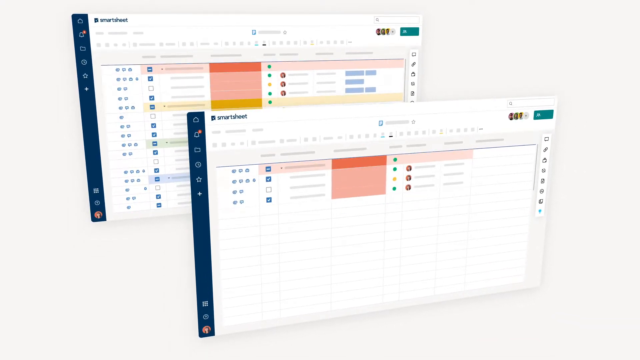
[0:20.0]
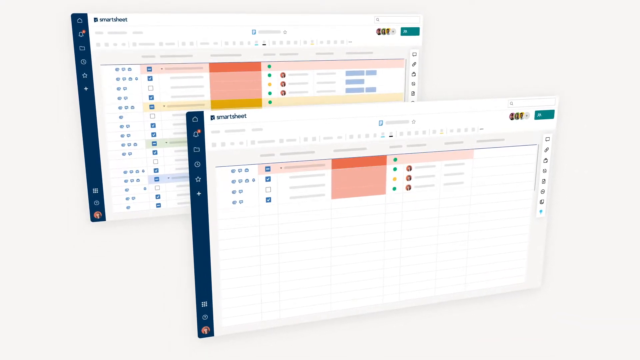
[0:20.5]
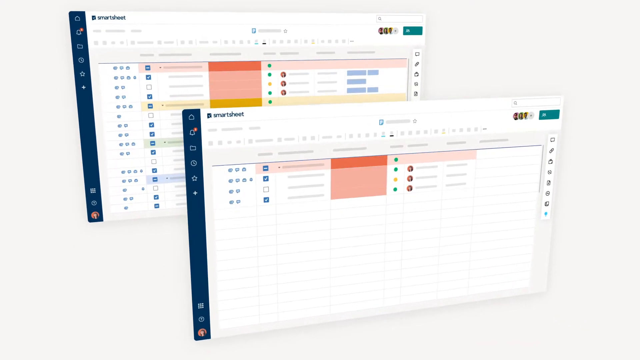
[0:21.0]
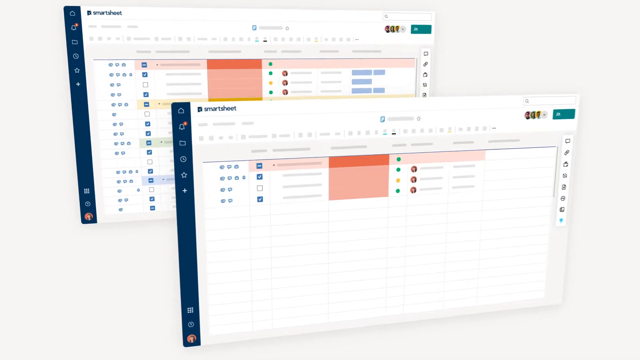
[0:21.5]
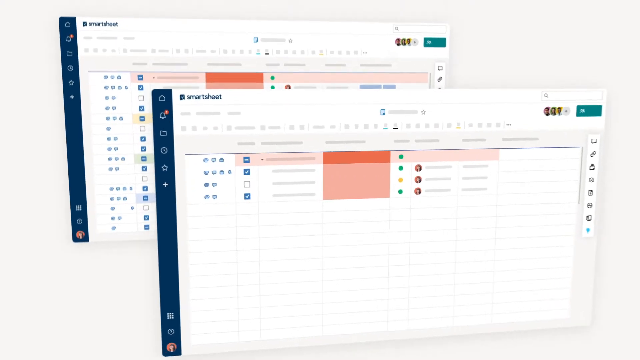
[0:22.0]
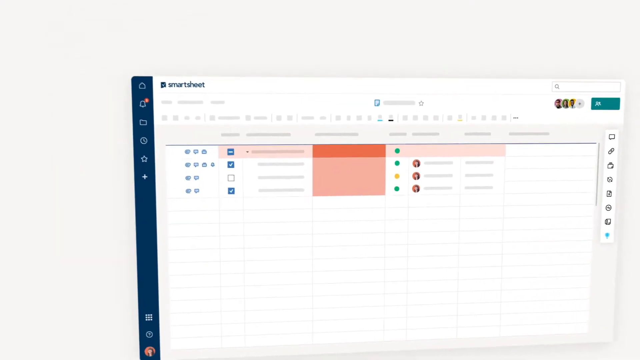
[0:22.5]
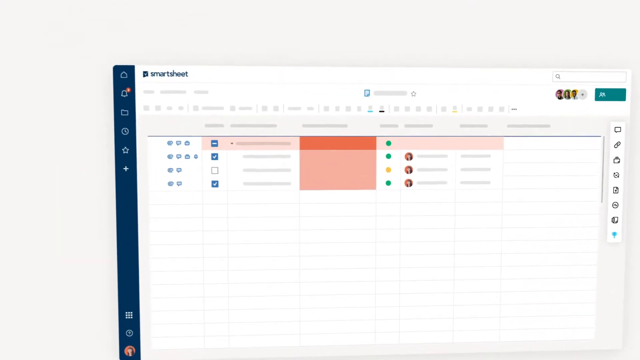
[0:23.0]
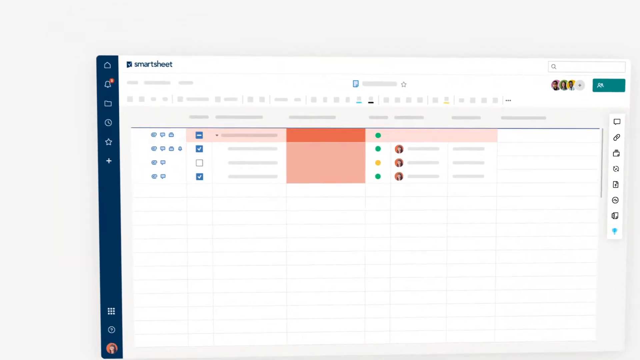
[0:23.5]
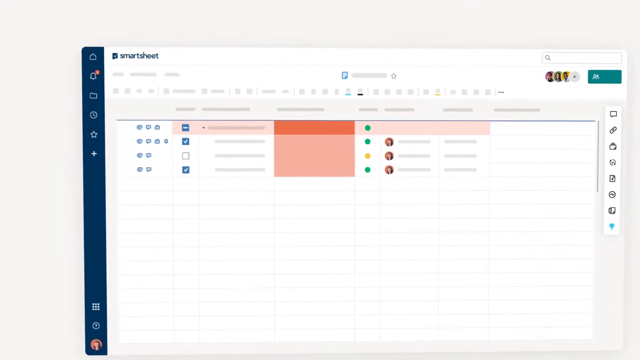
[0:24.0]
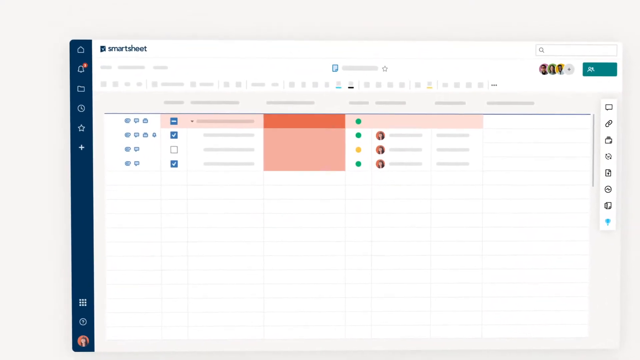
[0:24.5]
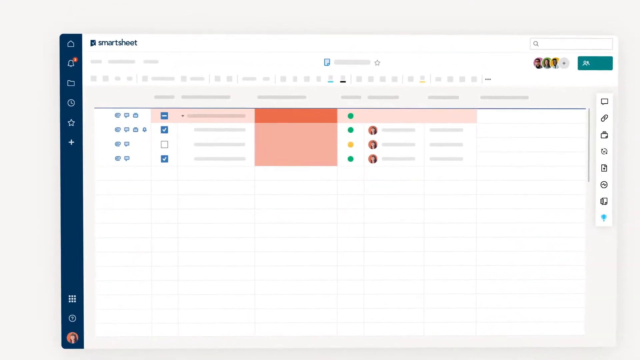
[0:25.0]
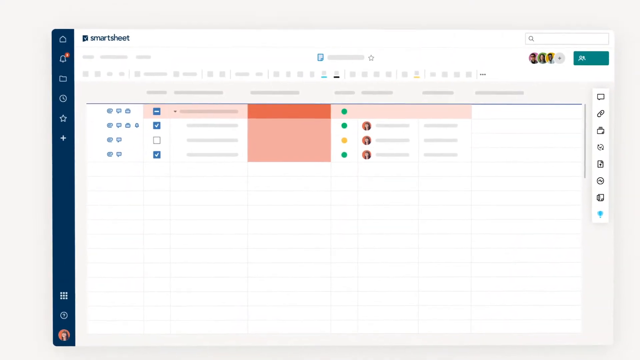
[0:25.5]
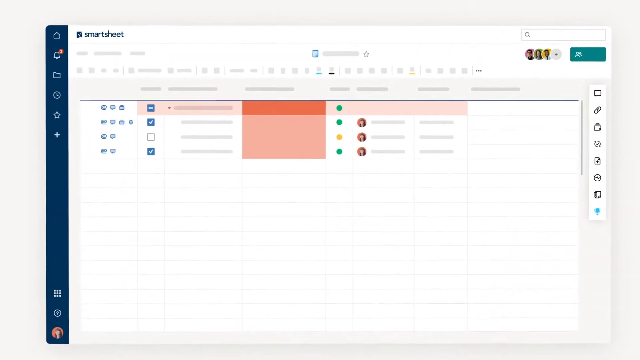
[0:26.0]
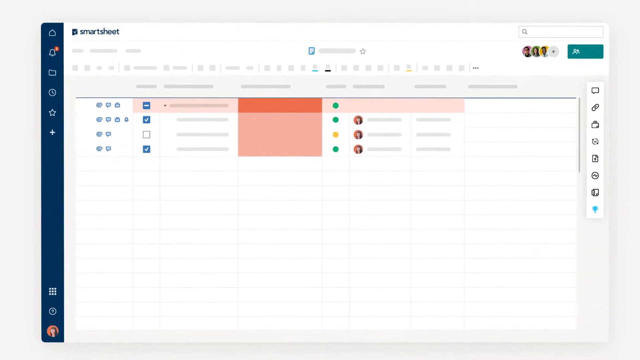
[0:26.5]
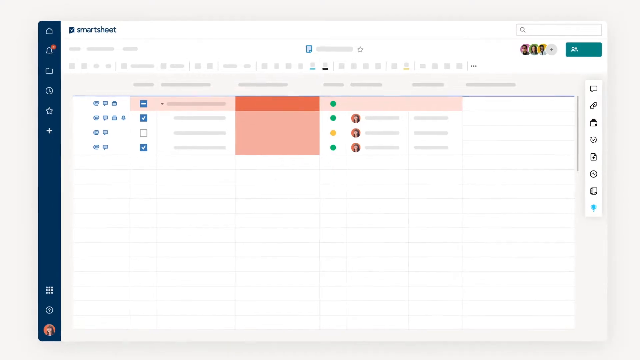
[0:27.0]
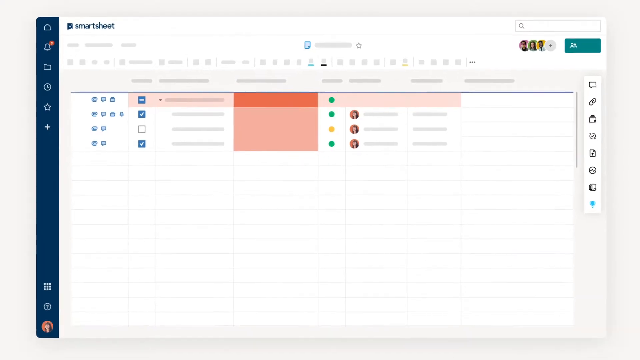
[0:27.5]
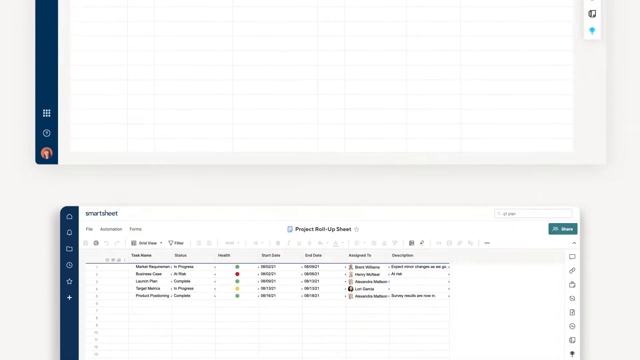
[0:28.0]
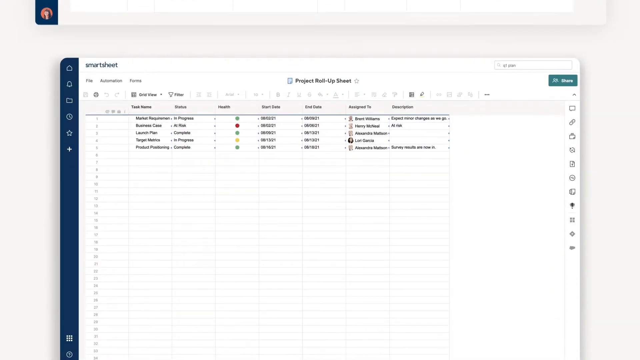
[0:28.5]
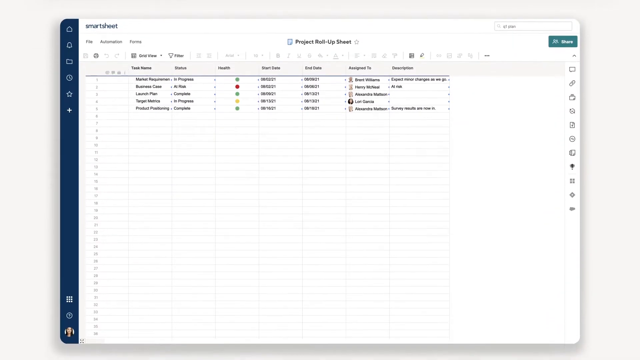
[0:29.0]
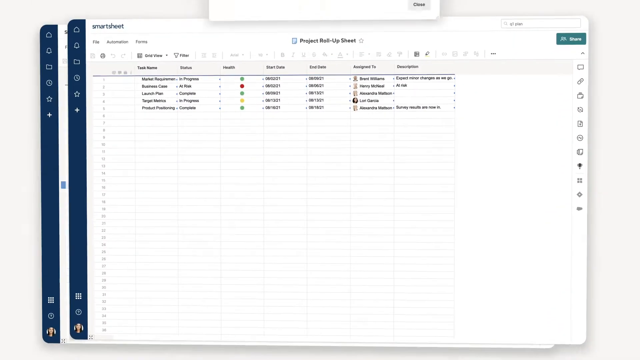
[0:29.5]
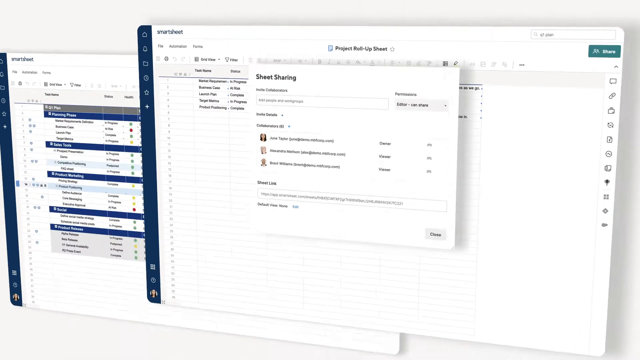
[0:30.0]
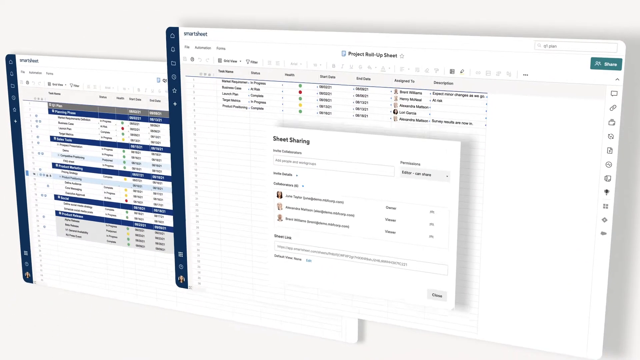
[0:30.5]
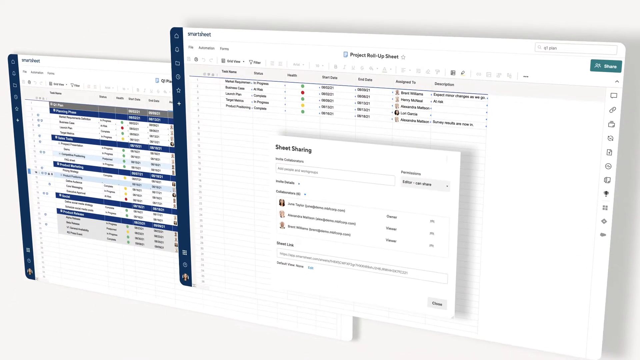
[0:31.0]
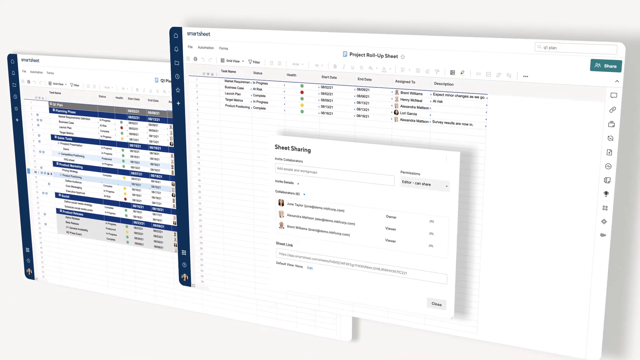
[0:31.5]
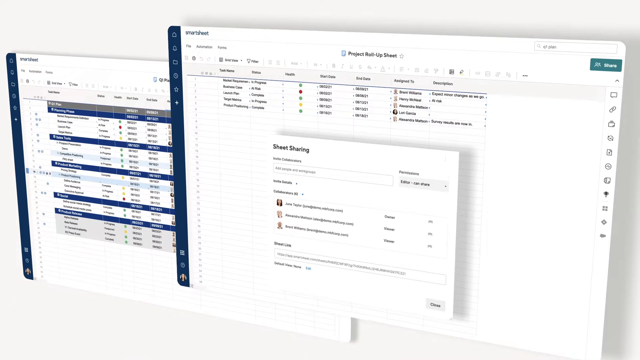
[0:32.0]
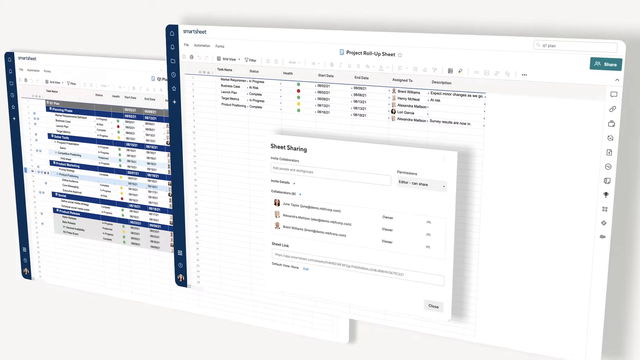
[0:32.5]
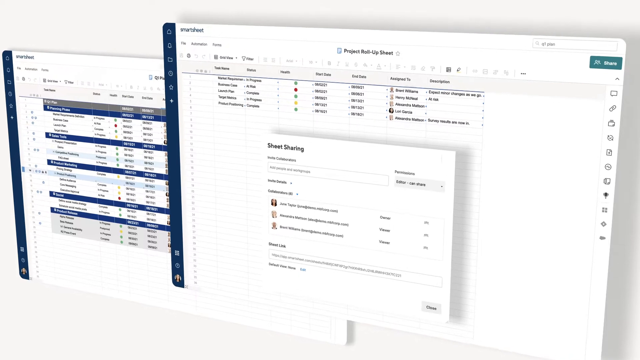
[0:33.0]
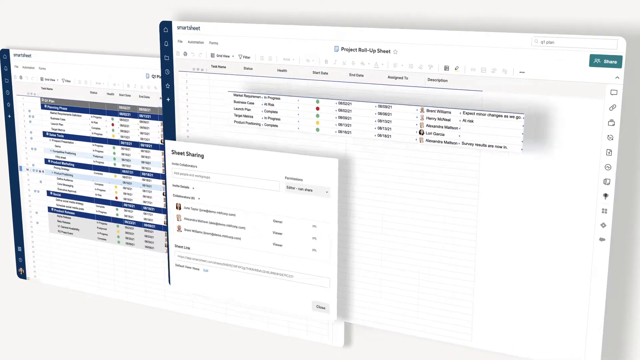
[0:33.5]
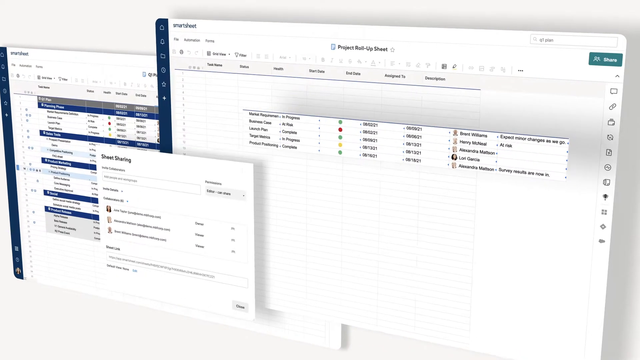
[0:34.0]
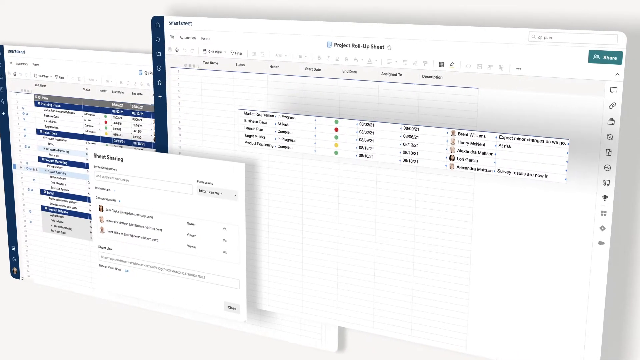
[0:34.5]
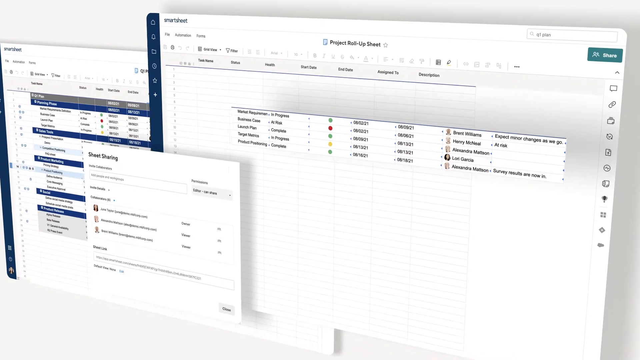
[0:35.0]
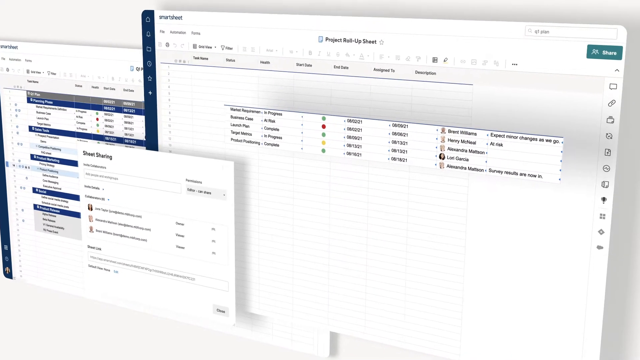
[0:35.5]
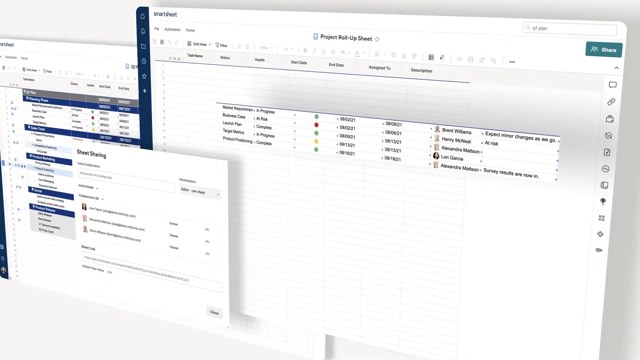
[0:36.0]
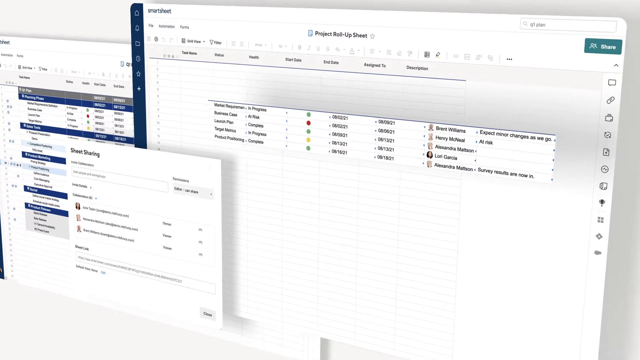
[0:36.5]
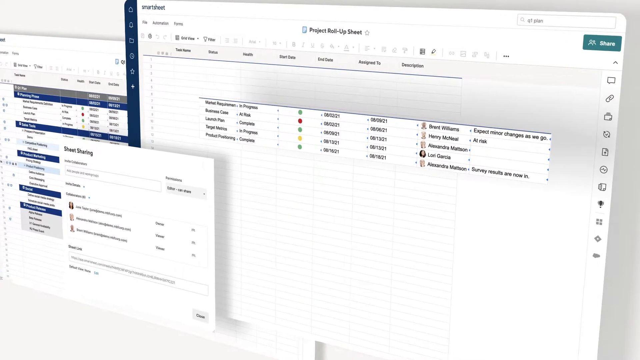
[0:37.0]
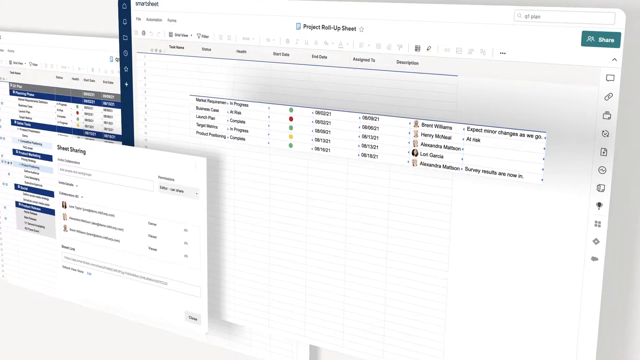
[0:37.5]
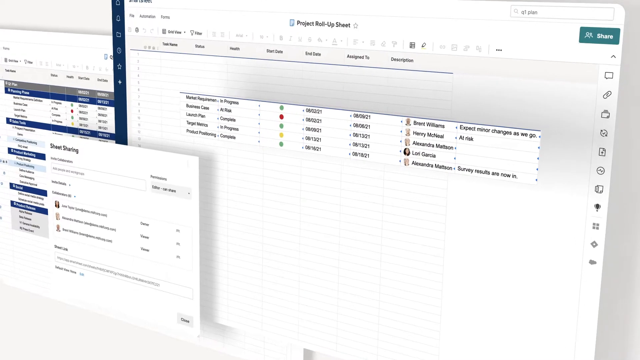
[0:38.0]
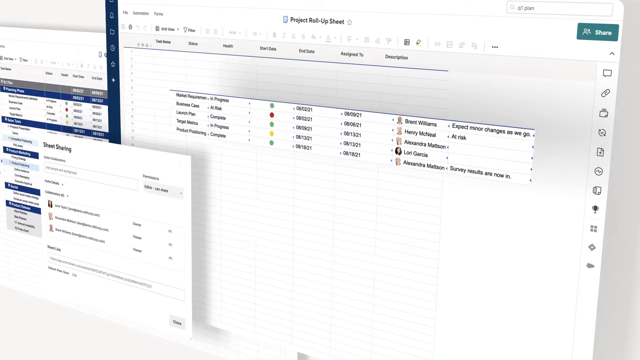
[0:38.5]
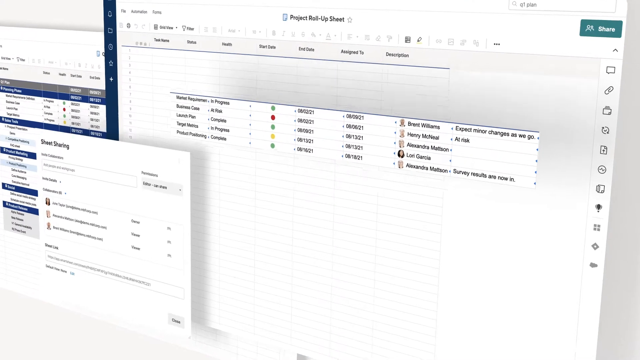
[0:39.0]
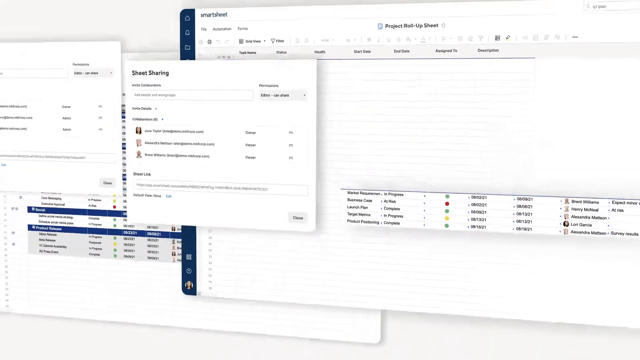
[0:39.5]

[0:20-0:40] More of the Smartsheet web page is shown, with pink boxes and blue check marks. Another sheet appears that says "Project Rollup Sheet," with different names and something like a launch plan. Its columns say "status," "health," "start date," "end date," "assign to" and "description." Then sheet sharing is brought up.